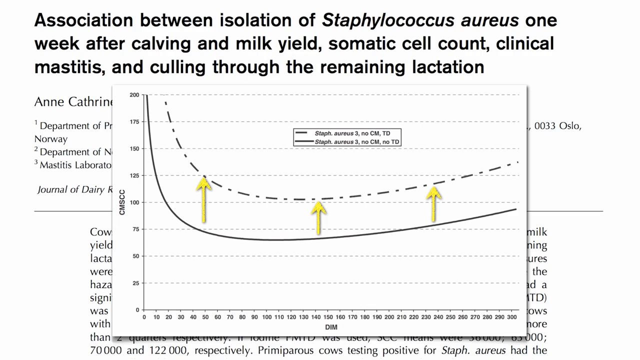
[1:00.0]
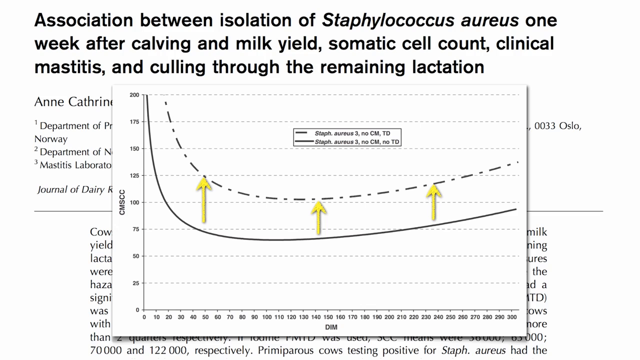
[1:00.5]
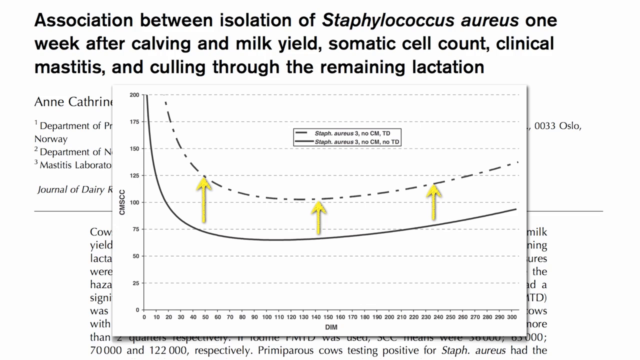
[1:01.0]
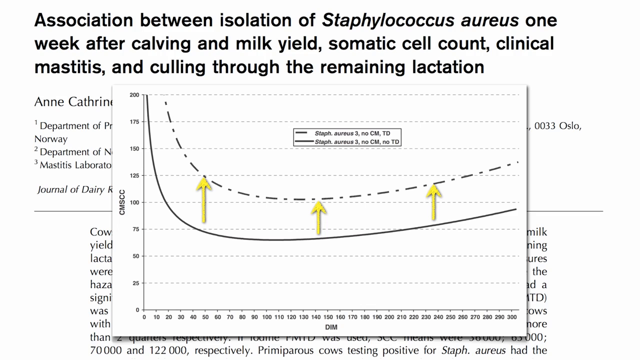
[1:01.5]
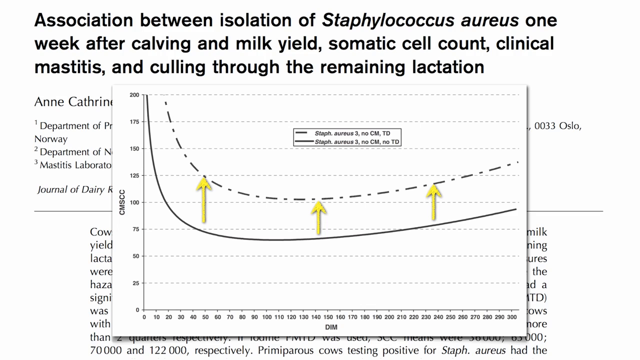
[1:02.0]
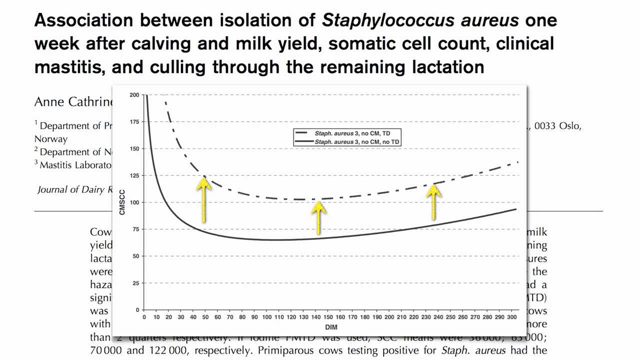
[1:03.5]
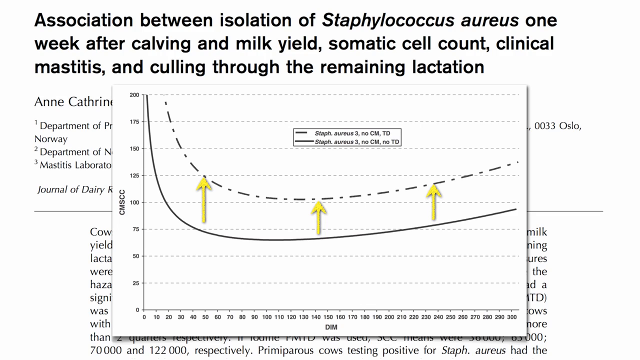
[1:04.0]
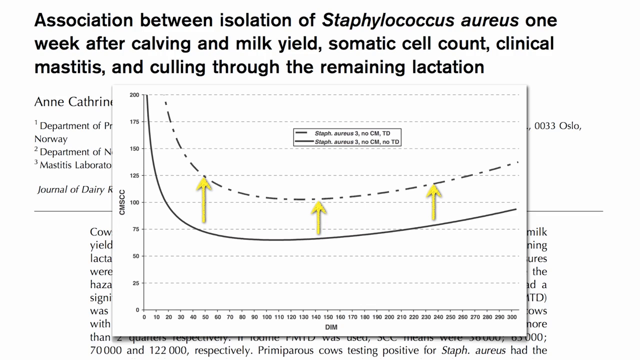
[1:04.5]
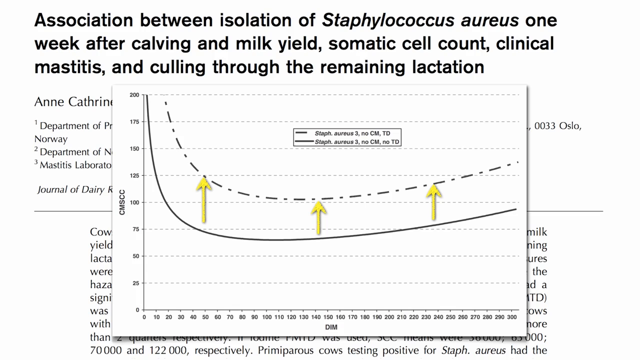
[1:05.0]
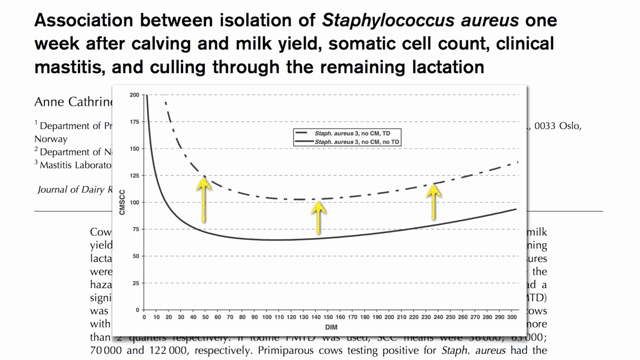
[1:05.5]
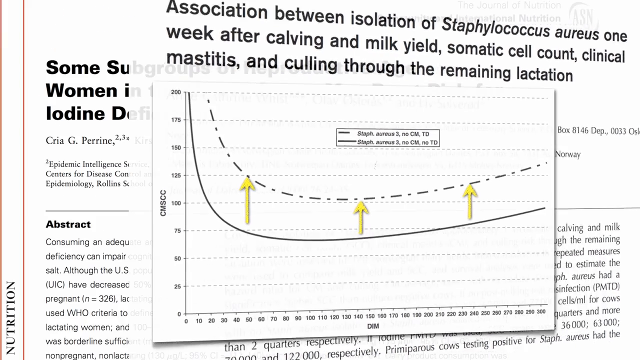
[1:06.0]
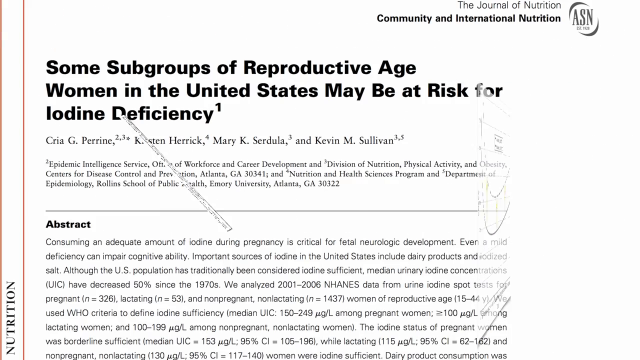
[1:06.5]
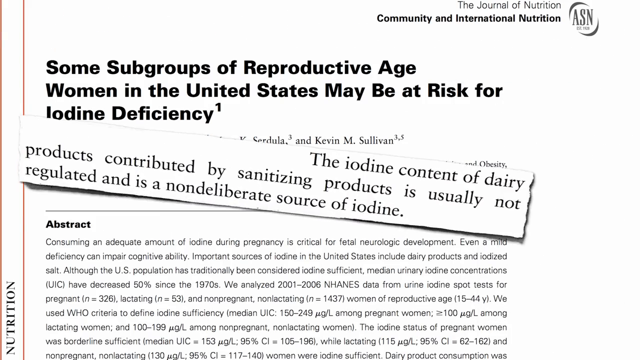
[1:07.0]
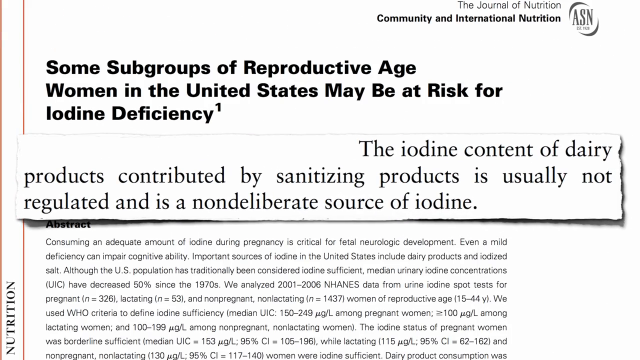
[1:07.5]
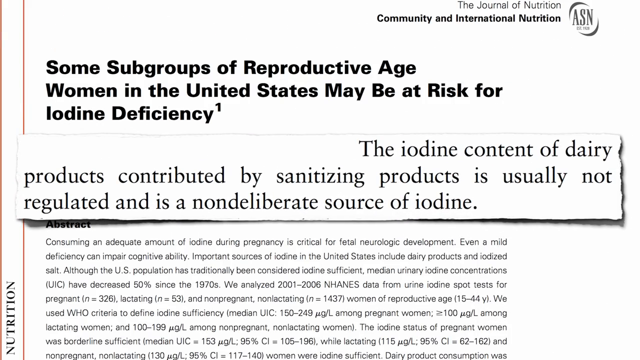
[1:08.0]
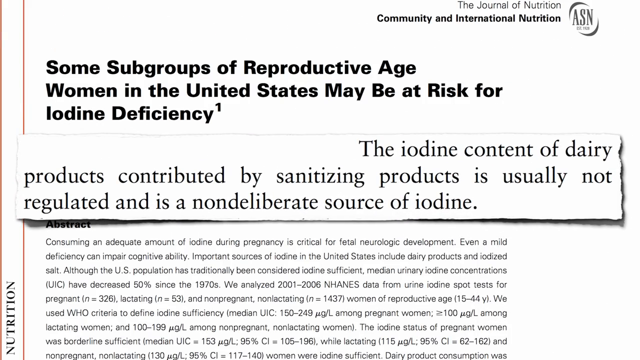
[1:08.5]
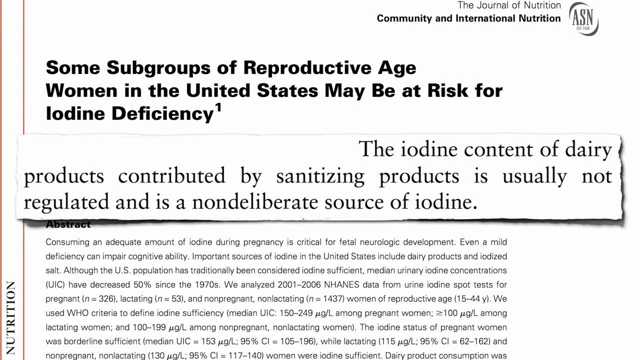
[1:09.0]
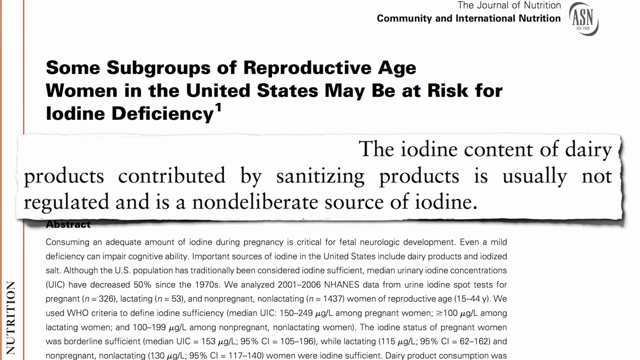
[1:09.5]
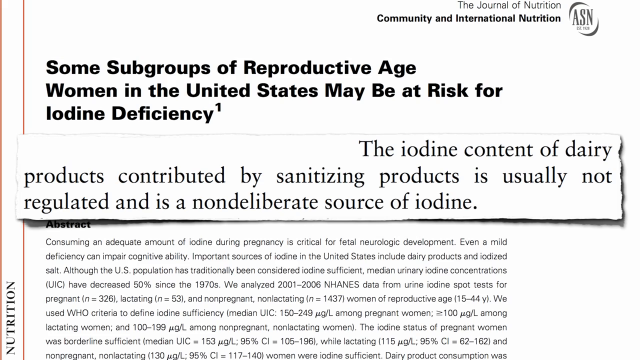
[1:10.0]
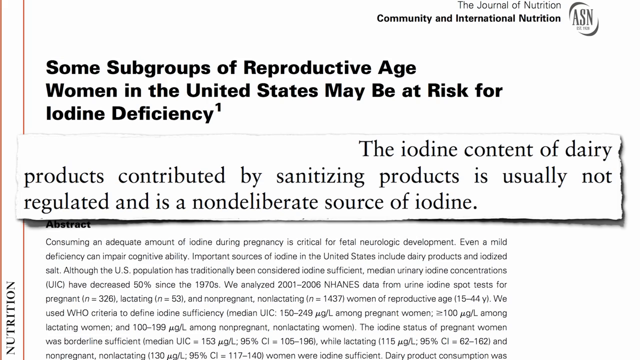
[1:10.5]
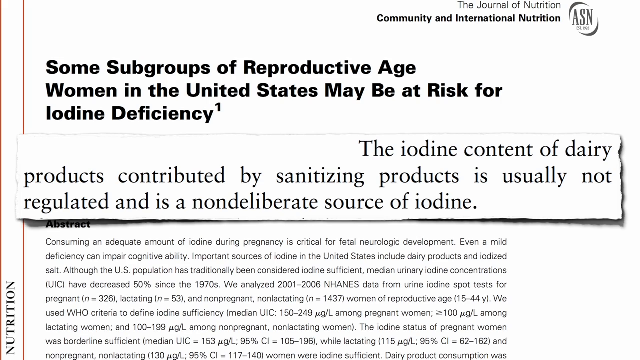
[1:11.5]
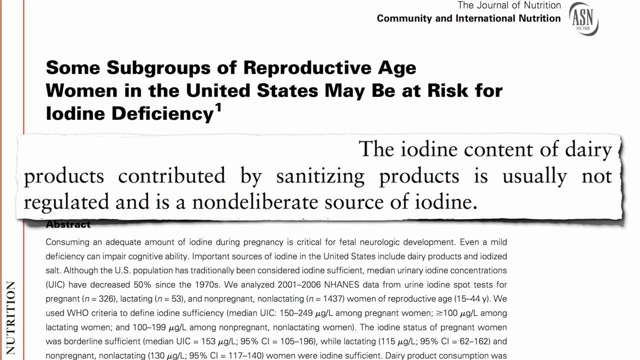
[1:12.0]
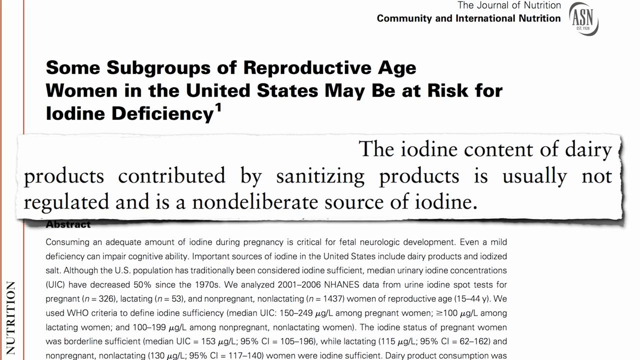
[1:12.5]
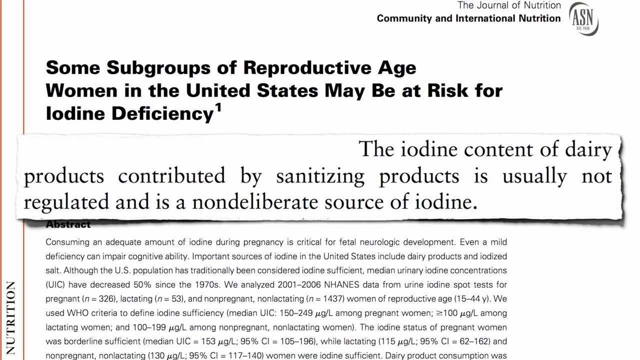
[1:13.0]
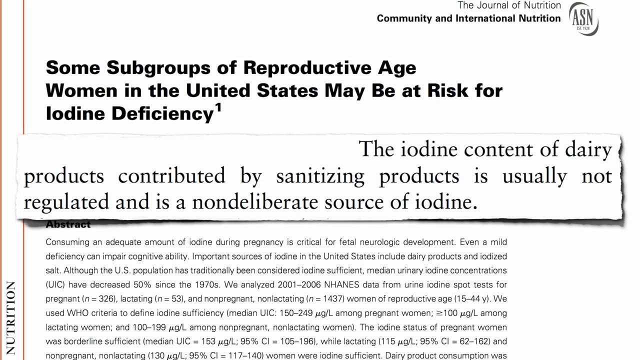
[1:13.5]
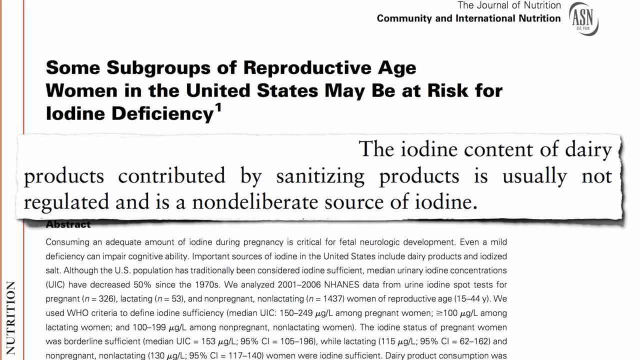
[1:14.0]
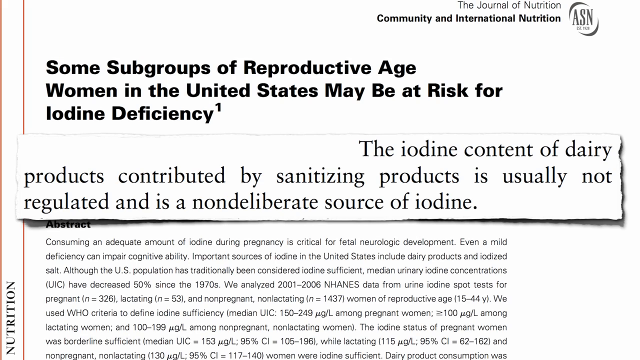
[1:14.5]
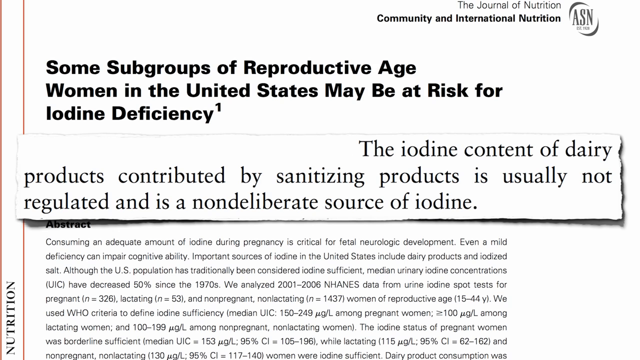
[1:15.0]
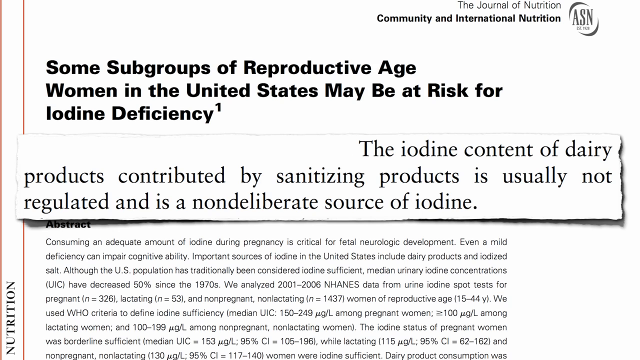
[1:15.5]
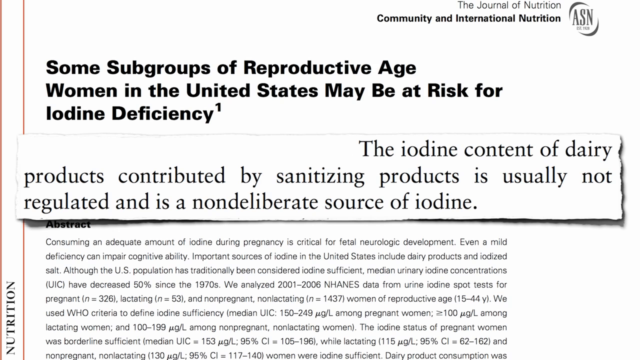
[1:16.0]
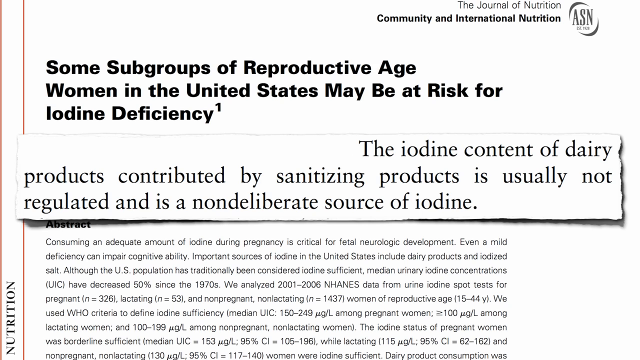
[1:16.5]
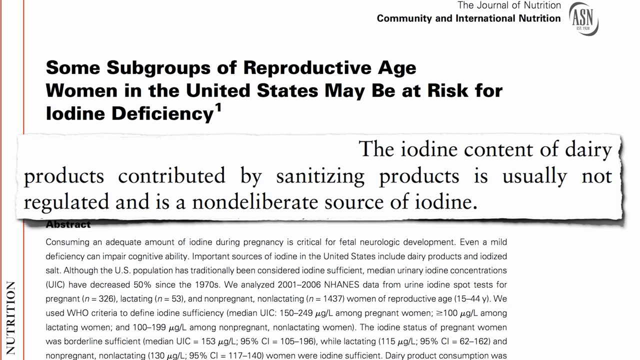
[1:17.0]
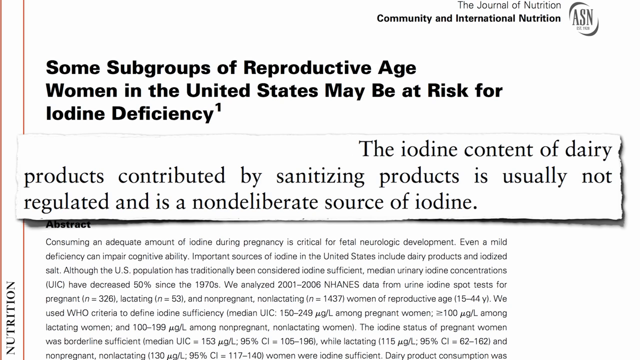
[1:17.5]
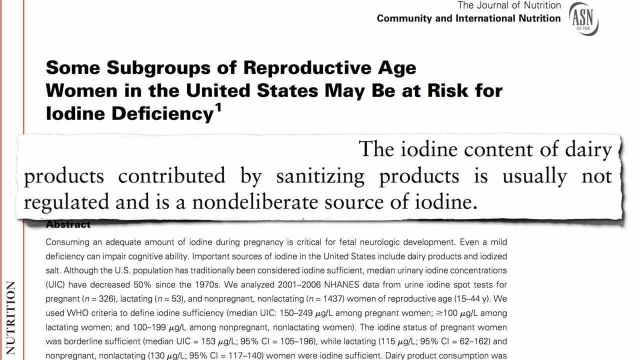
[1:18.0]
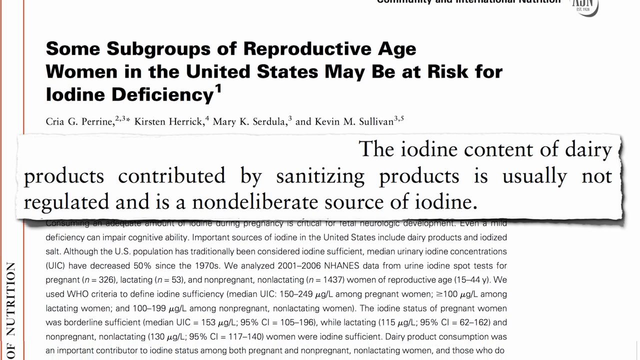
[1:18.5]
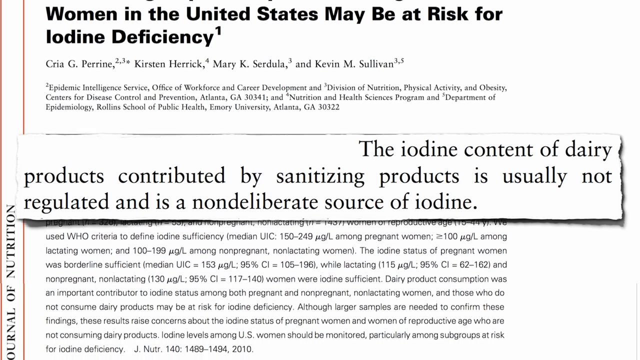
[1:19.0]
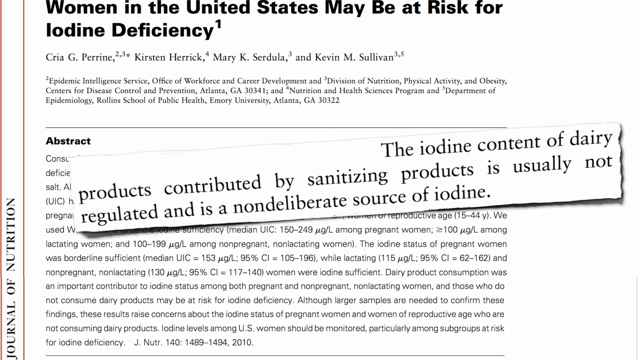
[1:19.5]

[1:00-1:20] The page on the association between isolation of Staphylococcus aureus and the graph appear first. The title "some subgroups of reproductive age women in the United States may be at risk for iodine deficiency" is then shown once again, and the view zooms in on text reading "the iodine content of dairy products contributed by sanitizing products is usually not regulated and is a non-deliberate source of iodine." The view scrolls and goes back to the chart, which says "association between isolation of Staphylococcus aureus one week after" calving. "The Journal of Nutrition, Community, and International Nutrition" is shown in the top right corner with an emblem that says "ASN." The abstract is also shown, saying "cows with isolation of Staphylococcus aureus approximately one week after calving and milk yield somatic cell count"; it is one paragraph, following some annotation. The annotation shows that Anne Catherine Wist, Olav Osteras, and Liv Solvarod worked on the article, and then lists by number the departments they are related to.